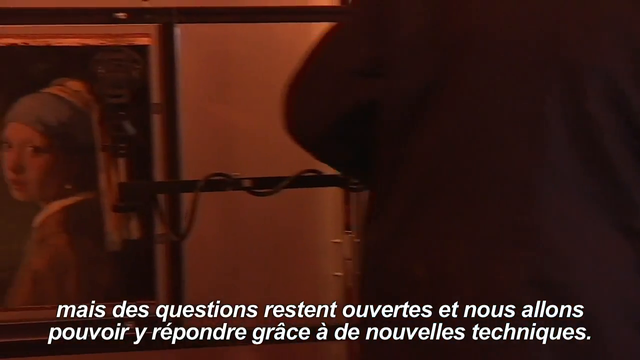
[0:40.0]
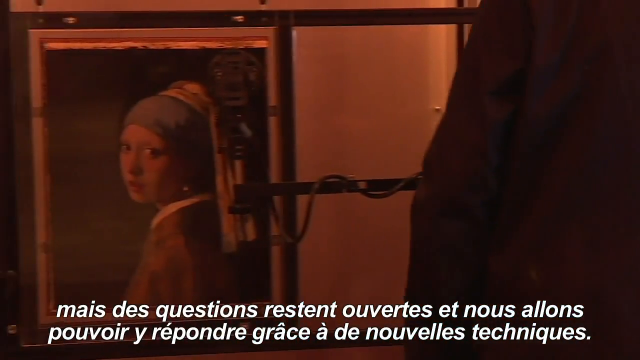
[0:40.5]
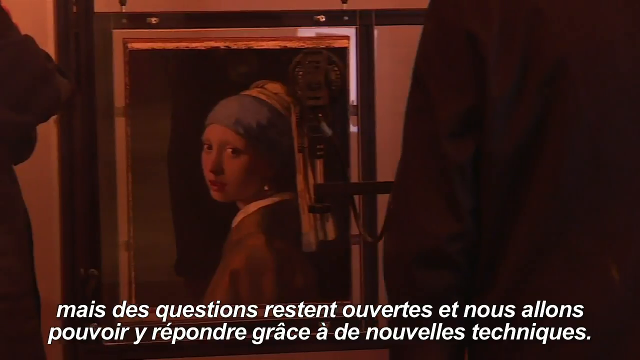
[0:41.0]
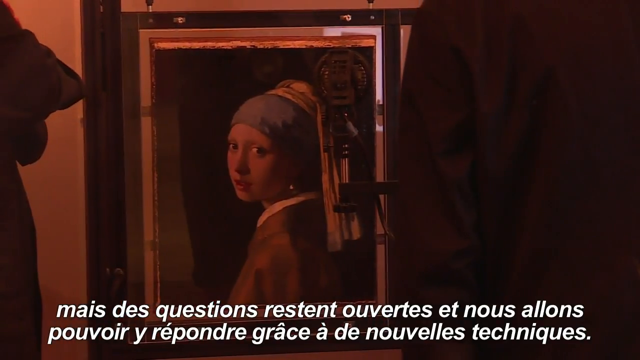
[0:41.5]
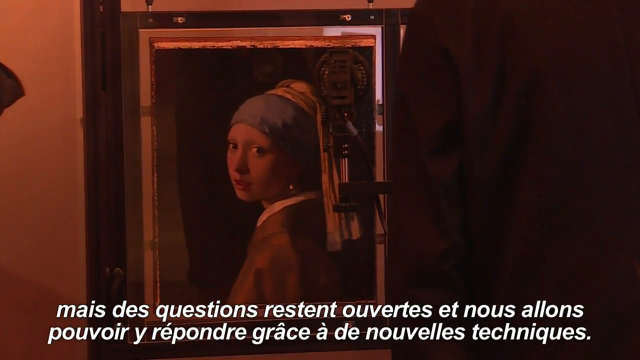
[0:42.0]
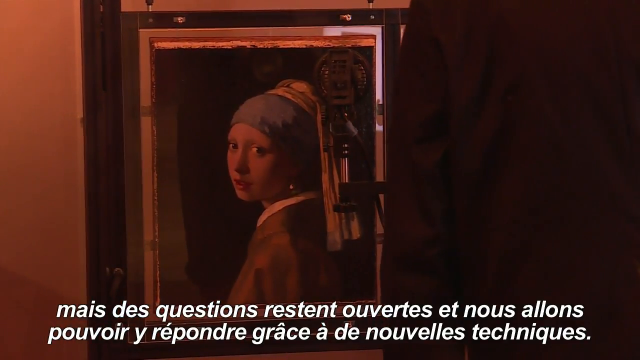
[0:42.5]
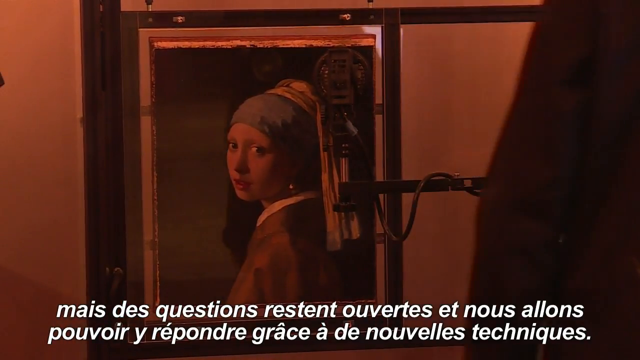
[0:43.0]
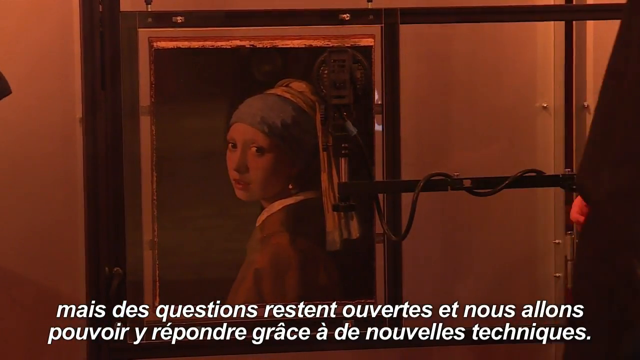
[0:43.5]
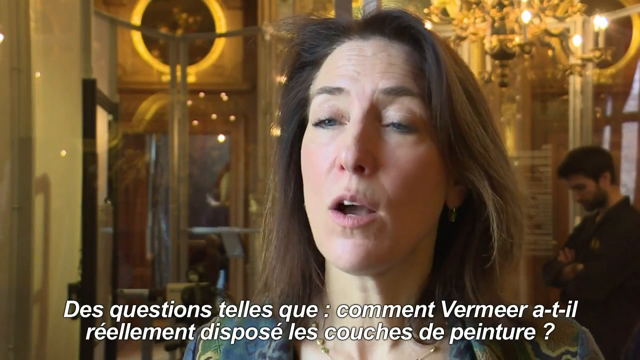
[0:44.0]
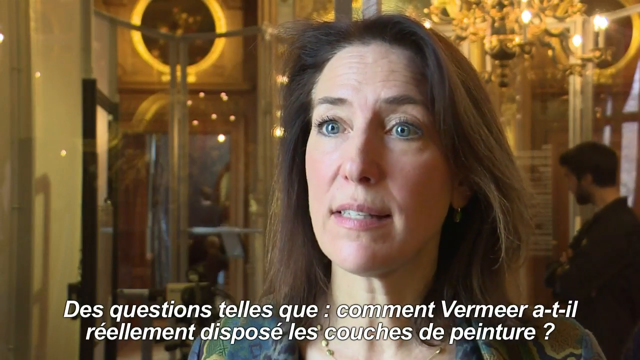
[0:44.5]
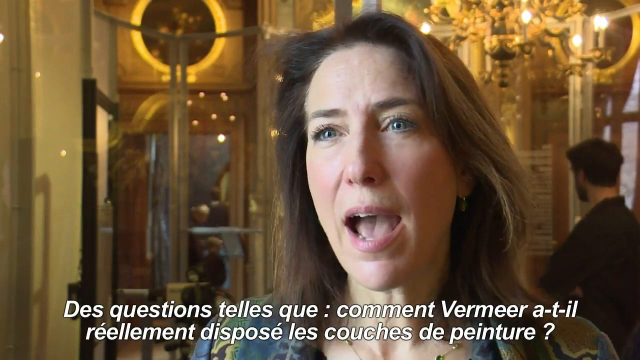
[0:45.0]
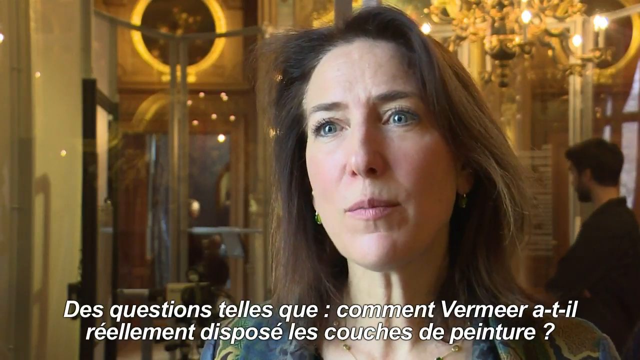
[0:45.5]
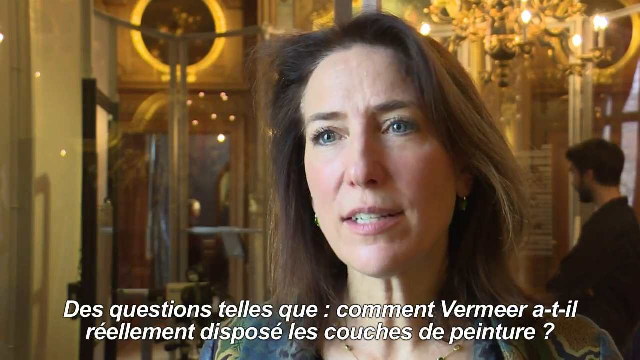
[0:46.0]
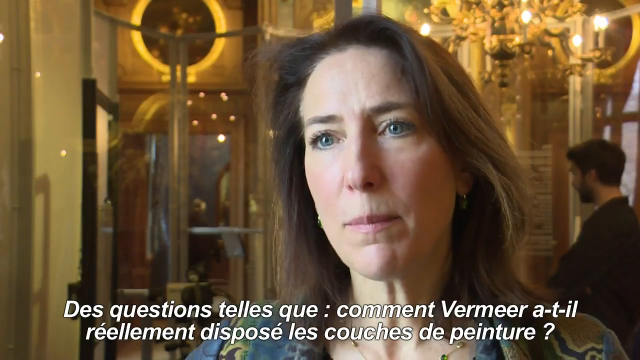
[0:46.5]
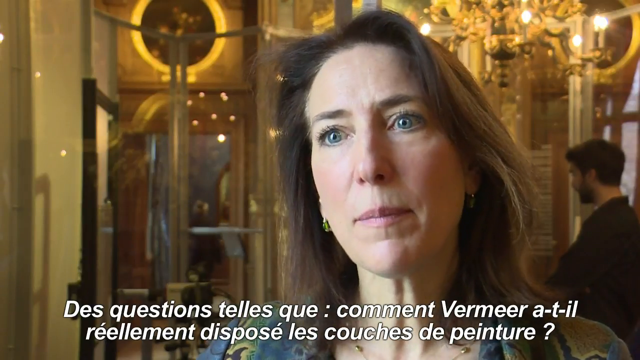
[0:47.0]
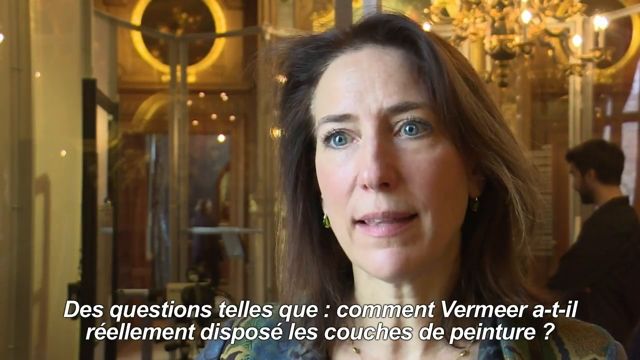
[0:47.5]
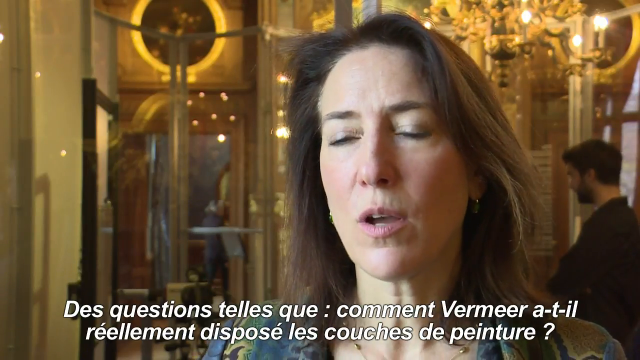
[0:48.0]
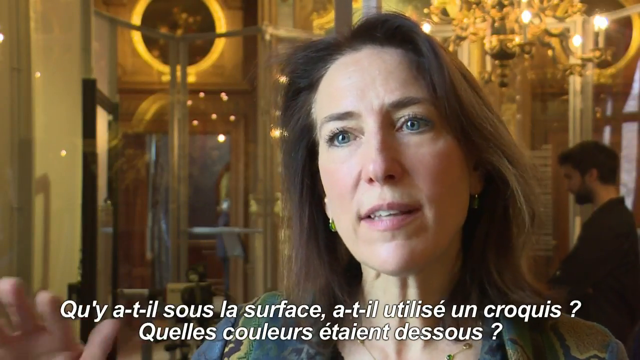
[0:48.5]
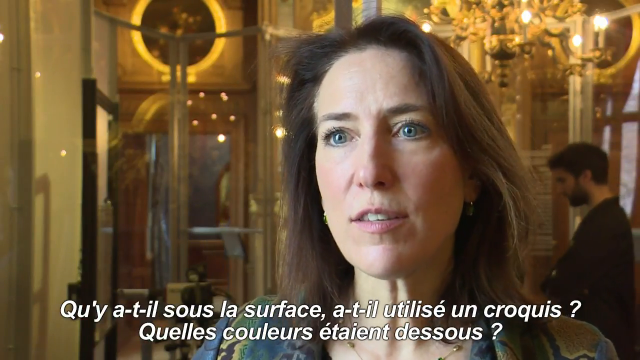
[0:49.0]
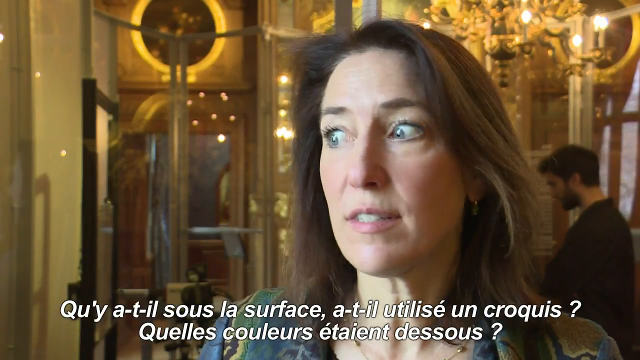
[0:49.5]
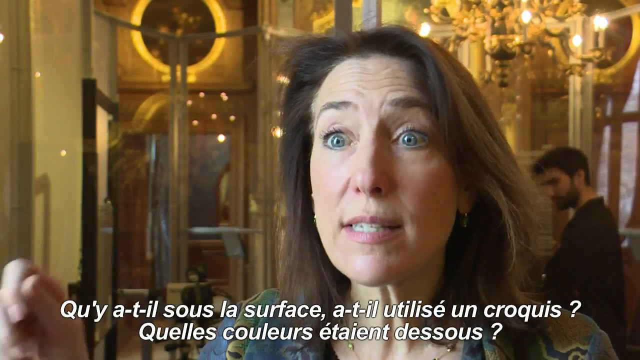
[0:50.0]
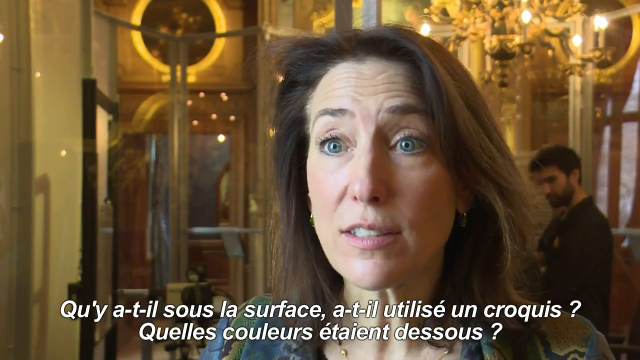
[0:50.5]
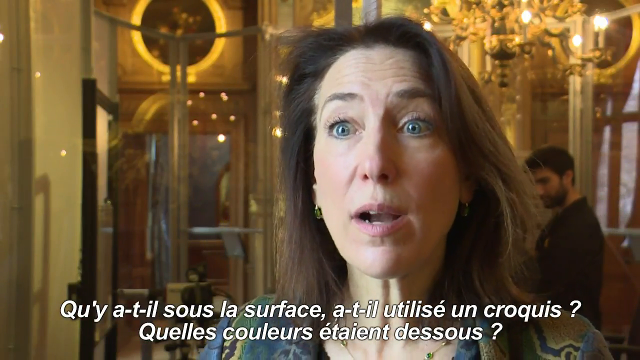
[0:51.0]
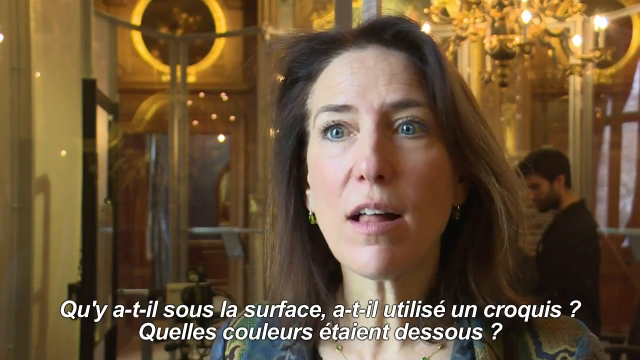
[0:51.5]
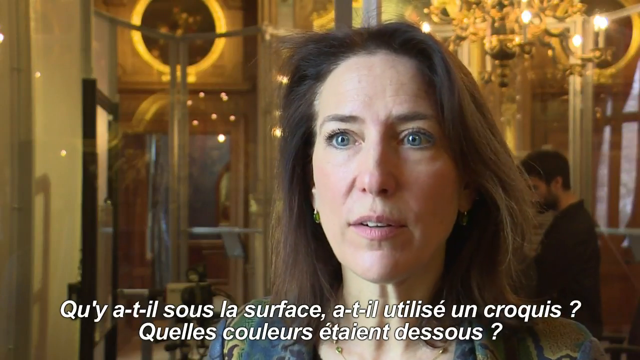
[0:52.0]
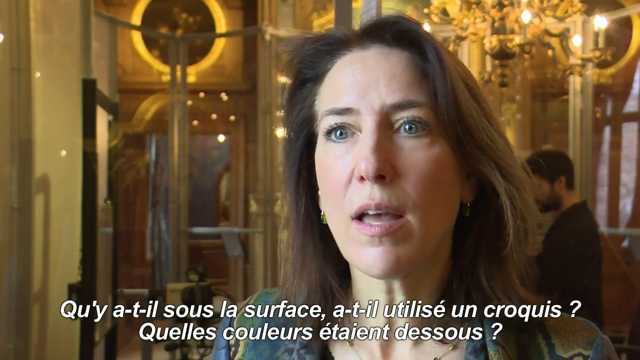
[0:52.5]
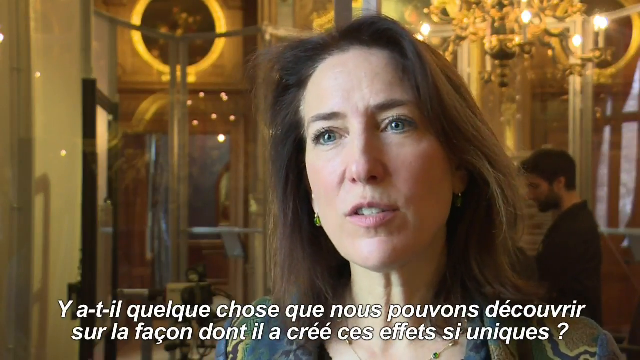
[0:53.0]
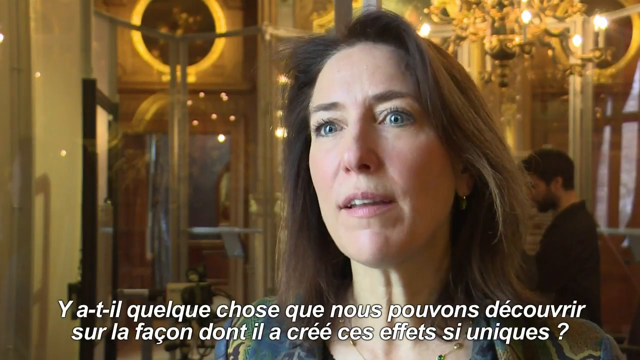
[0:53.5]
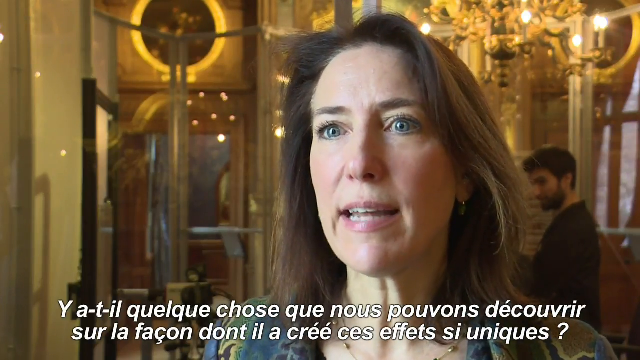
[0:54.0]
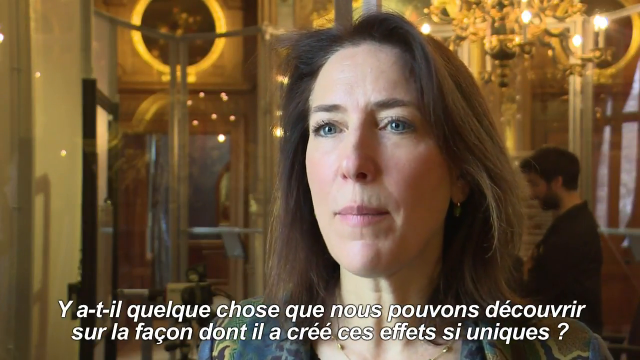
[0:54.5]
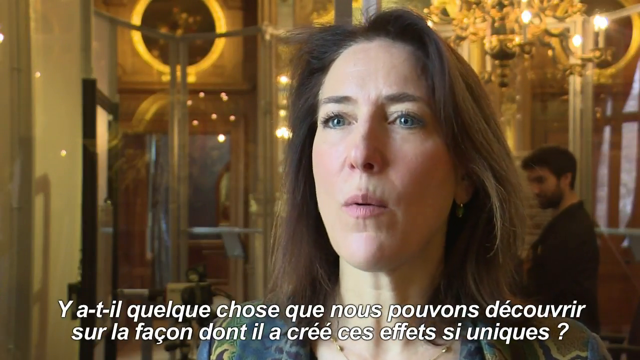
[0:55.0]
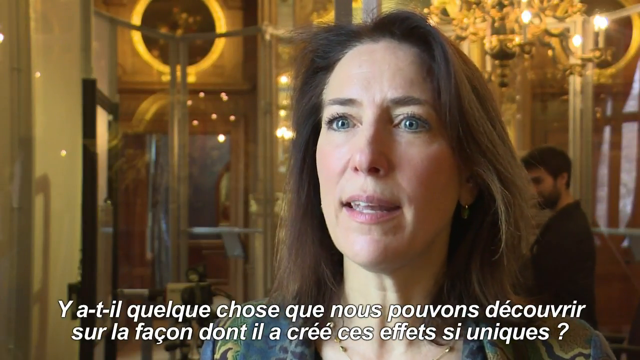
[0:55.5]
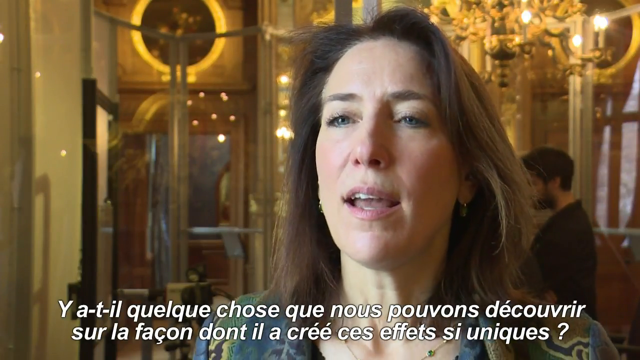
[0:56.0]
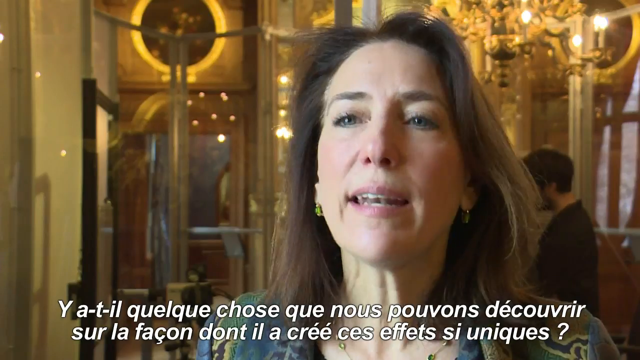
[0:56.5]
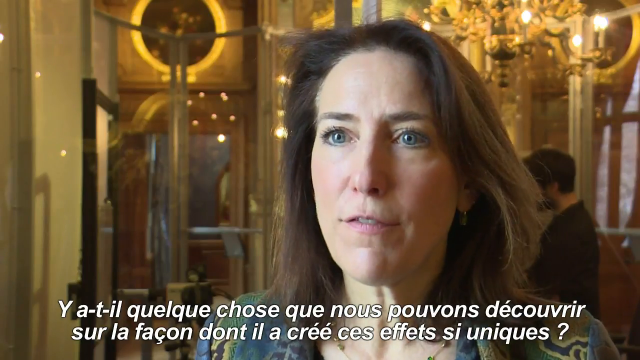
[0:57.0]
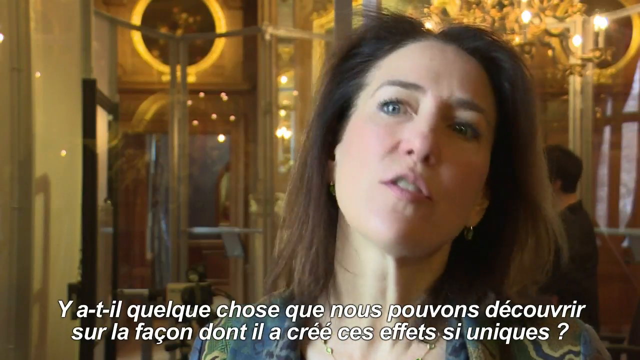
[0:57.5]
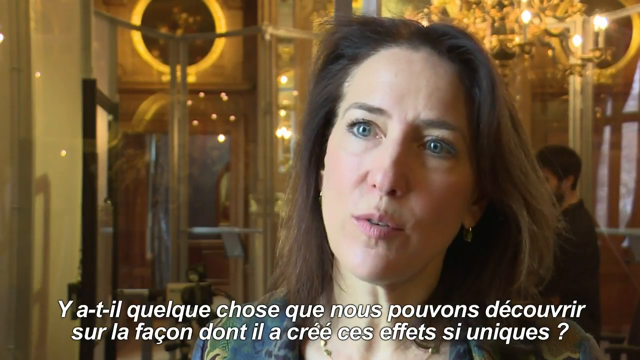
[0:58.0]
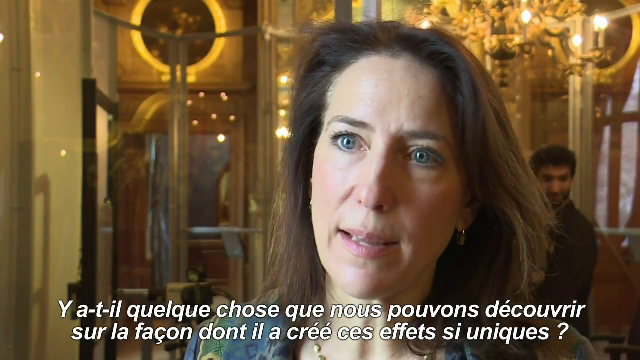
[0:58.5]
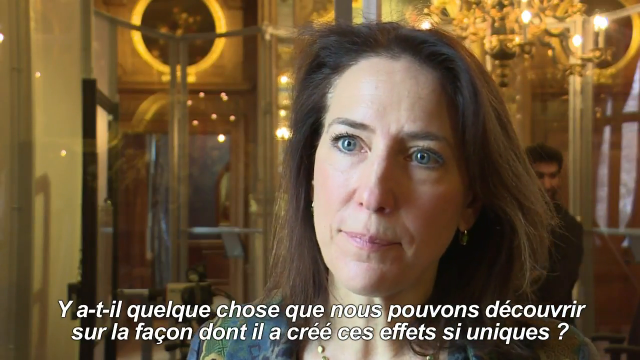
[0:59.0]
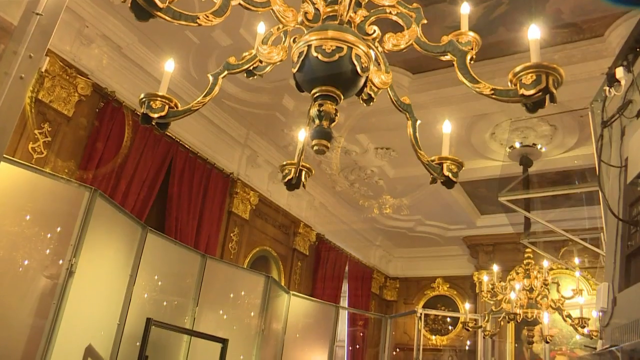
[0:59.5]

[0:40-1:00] The room now appears red, apparently from a change in lighting. The camera is back and shows a better close-up of the painting: apparently a younger girl looking back over her left shoulder, wearing a brown jacket with a white shirt underneath and an earring in her left ear, mouth closed. She has what appears to be a blue bandana covering a significant portion of her forehead and her hair; her hair looks tied back, or a bandana is over the hair, or possibly it is all one piece on her head. The video then returns to the interviewed lady, with subtitles in an unfamiliar language. Behind her to her left, people are visible through a window, kind of walking into an area, and a man is behind her on her right. The interview goes on for most of this part. Toward the end, a black and gold chandelier is shown with another one behind it, and as the camera pans down, just before a cut, red curtains appear, almost like an entrance to a protected area, possibly in an old home or something.